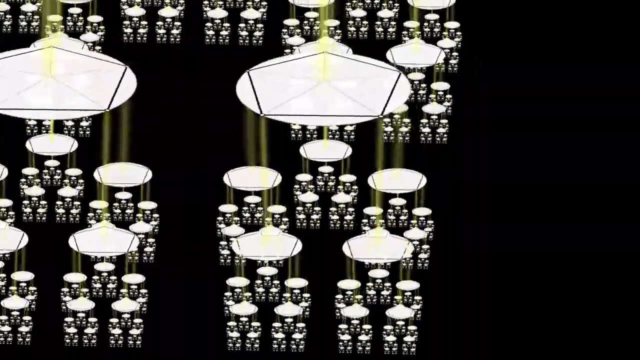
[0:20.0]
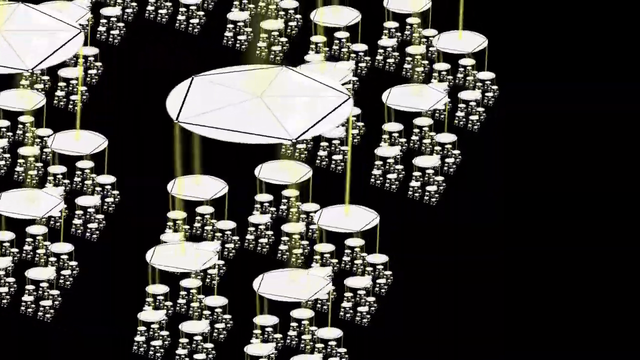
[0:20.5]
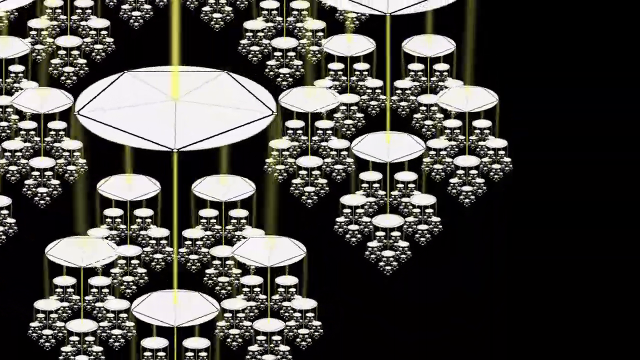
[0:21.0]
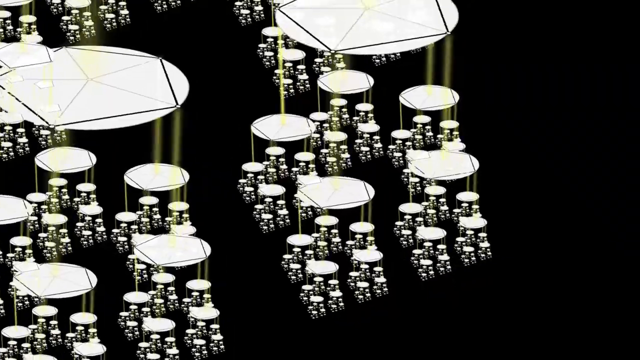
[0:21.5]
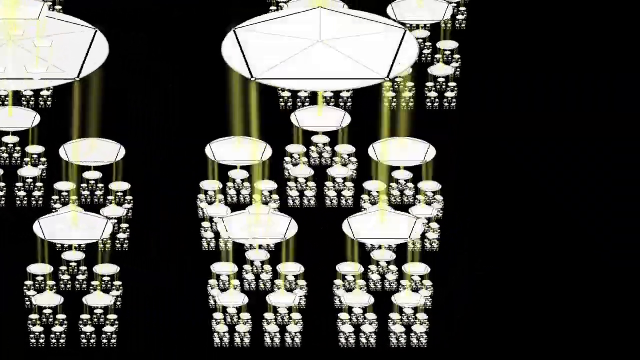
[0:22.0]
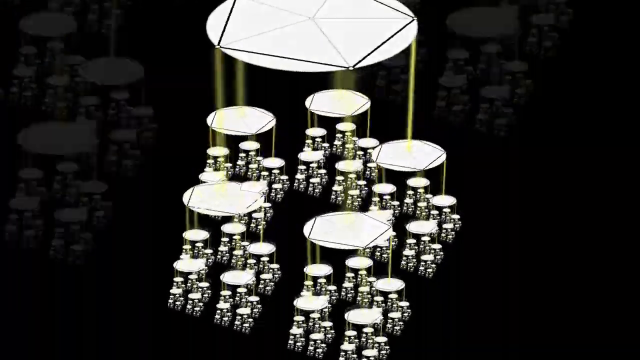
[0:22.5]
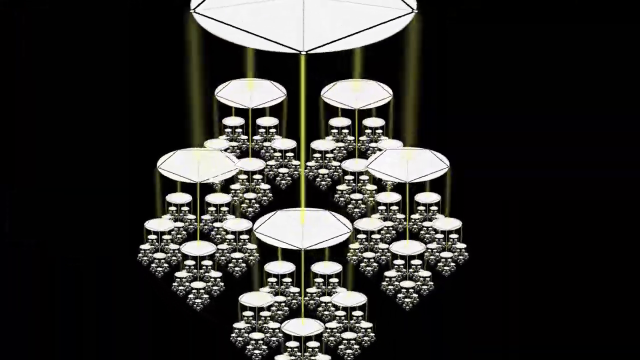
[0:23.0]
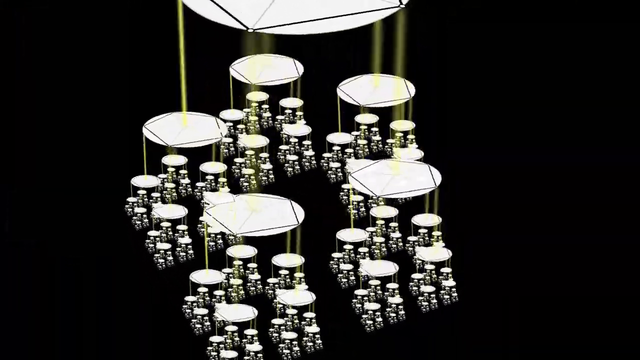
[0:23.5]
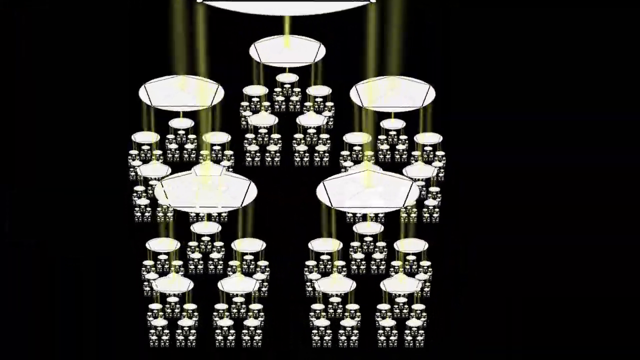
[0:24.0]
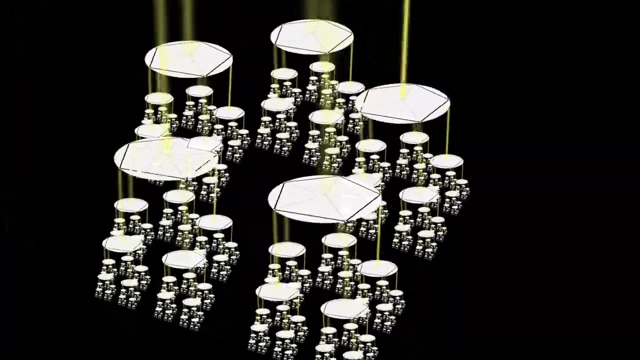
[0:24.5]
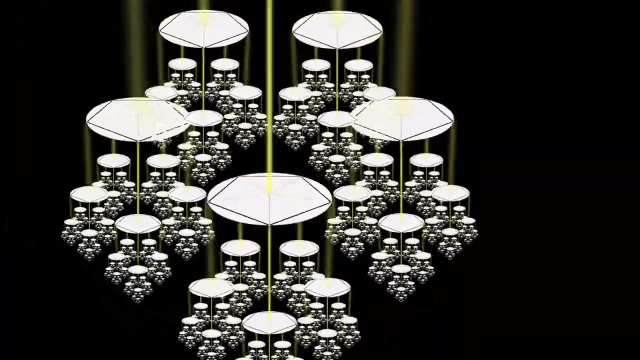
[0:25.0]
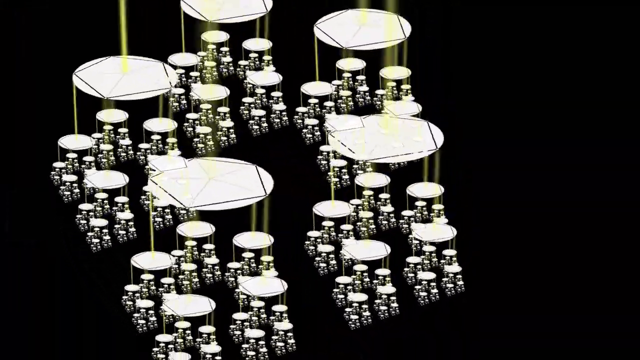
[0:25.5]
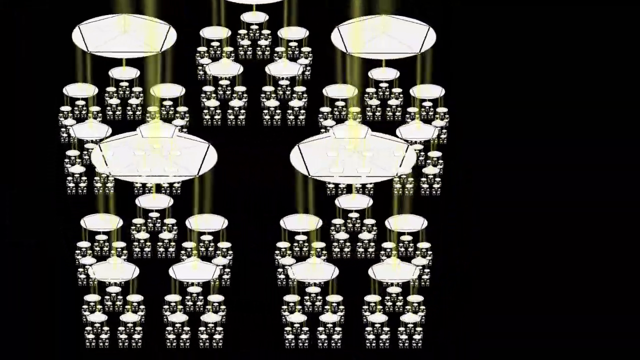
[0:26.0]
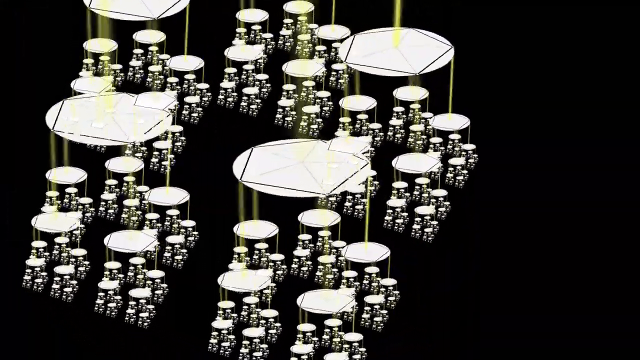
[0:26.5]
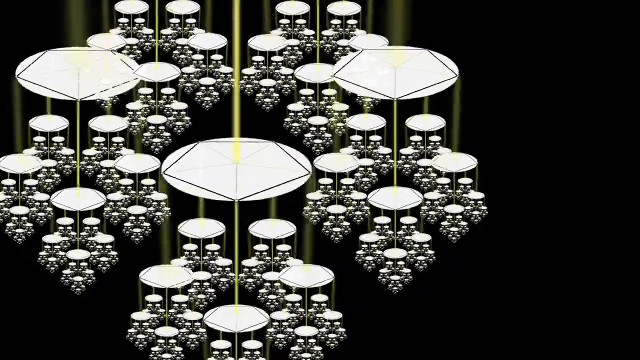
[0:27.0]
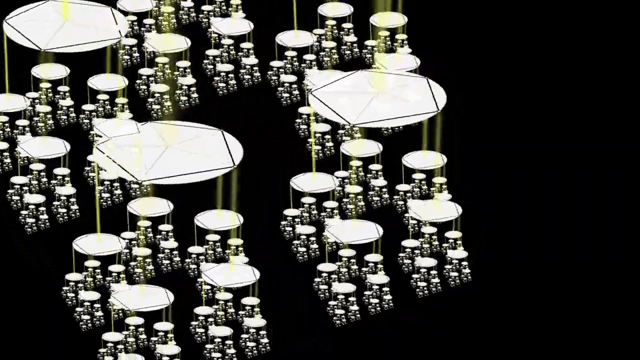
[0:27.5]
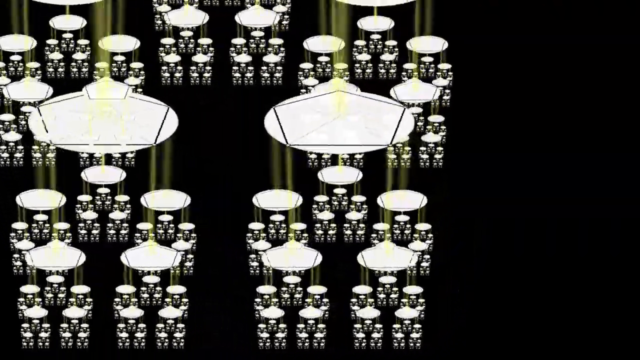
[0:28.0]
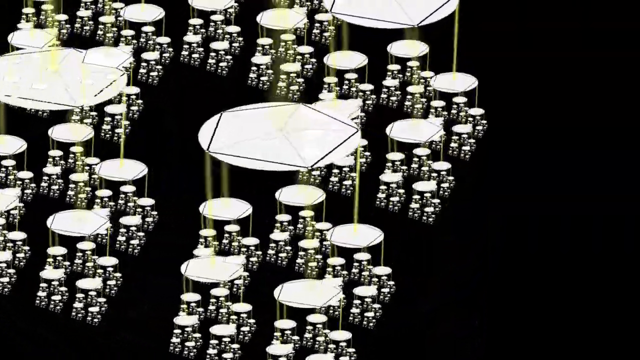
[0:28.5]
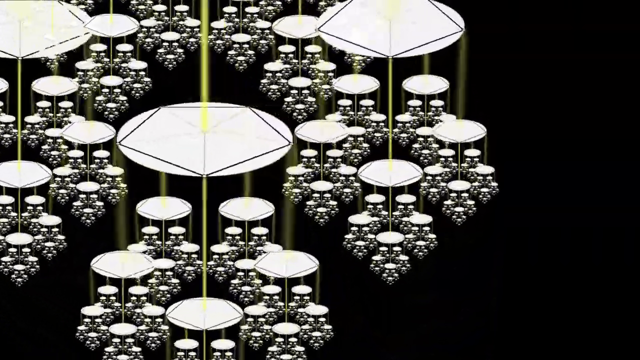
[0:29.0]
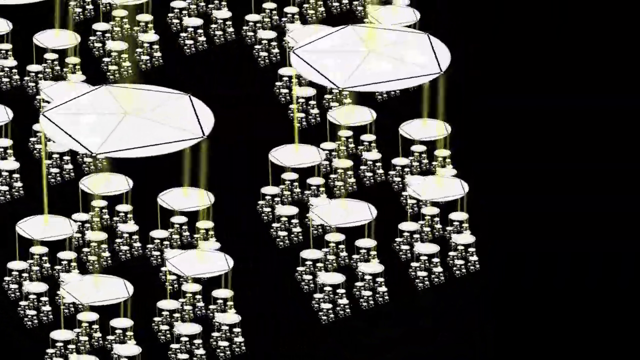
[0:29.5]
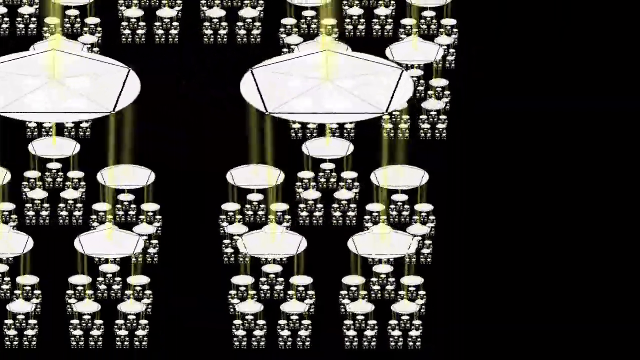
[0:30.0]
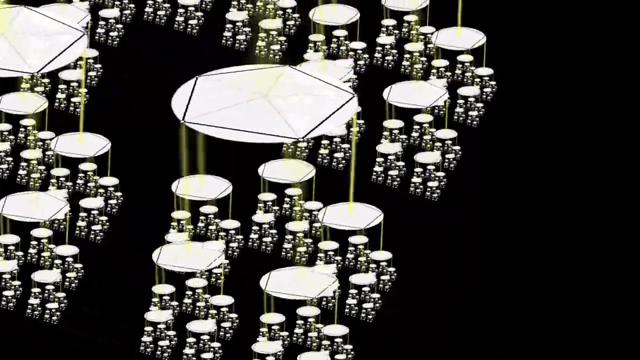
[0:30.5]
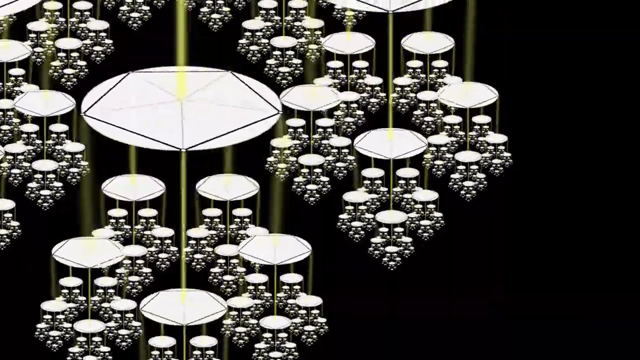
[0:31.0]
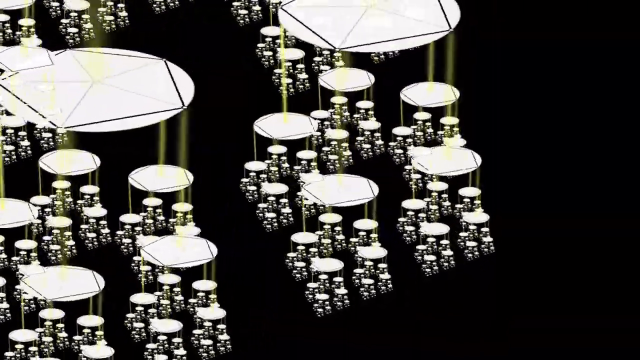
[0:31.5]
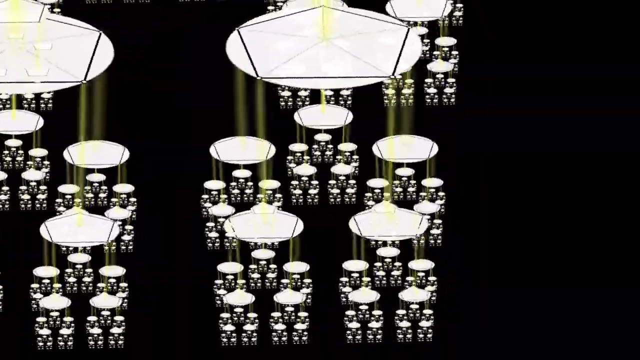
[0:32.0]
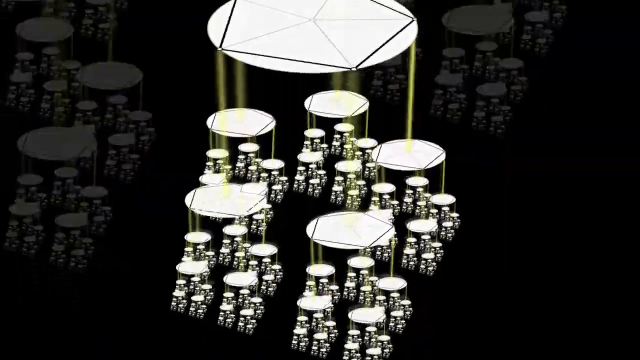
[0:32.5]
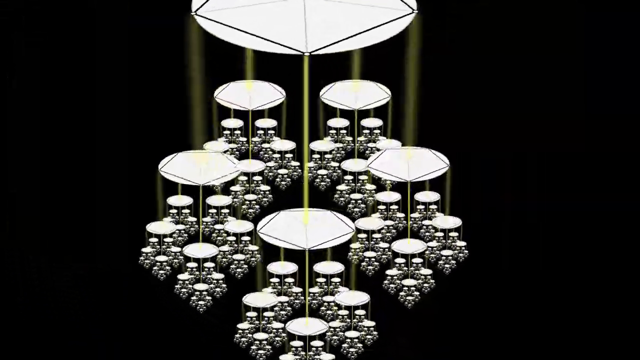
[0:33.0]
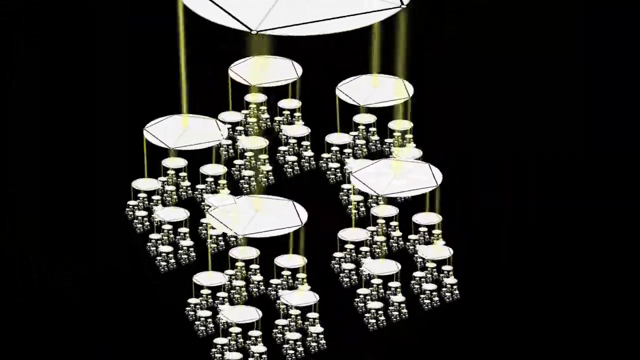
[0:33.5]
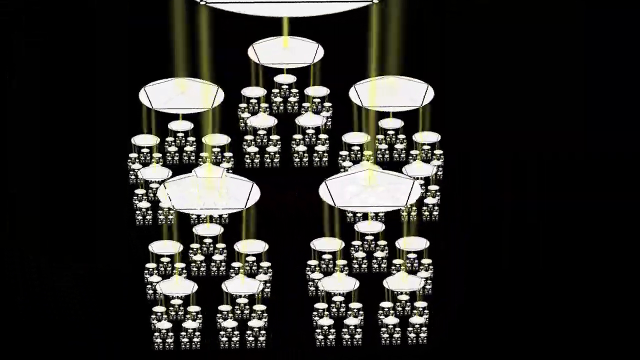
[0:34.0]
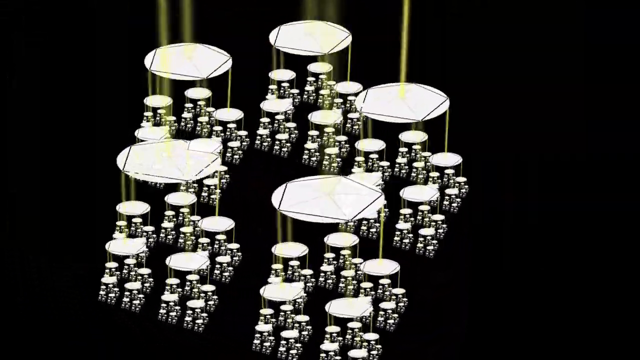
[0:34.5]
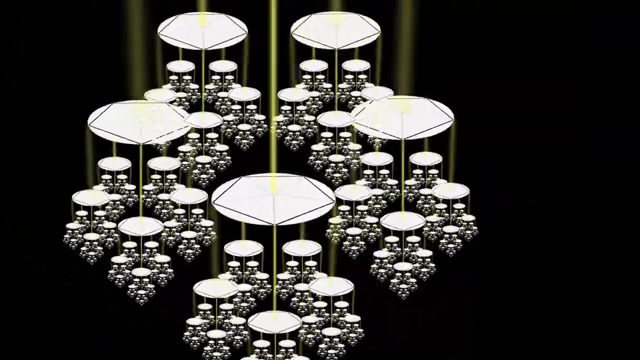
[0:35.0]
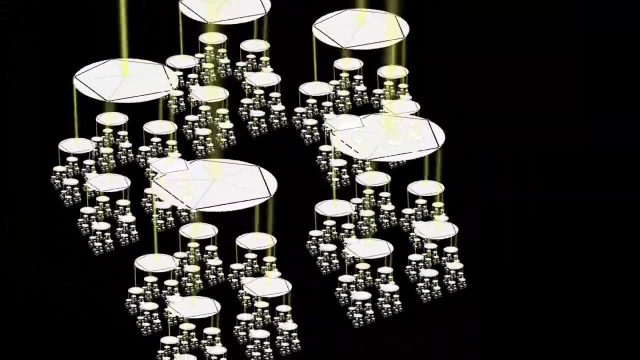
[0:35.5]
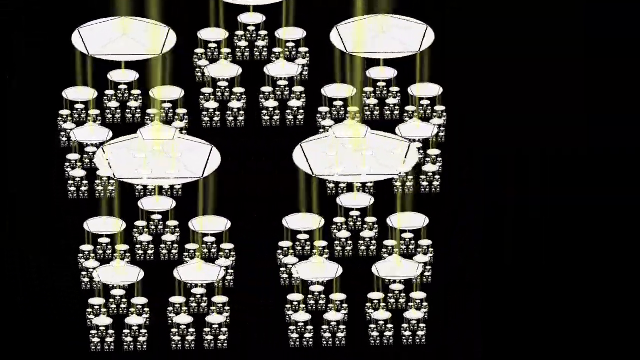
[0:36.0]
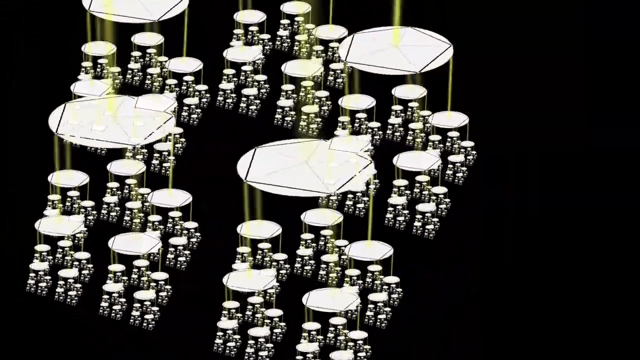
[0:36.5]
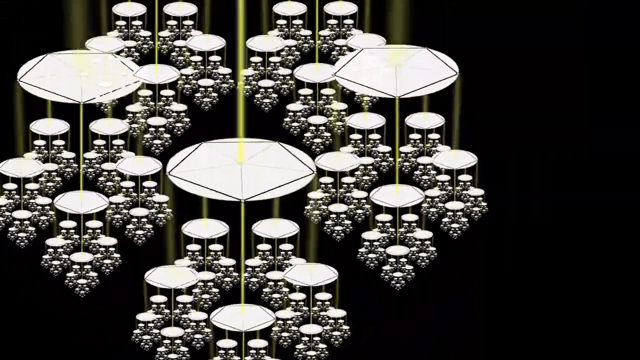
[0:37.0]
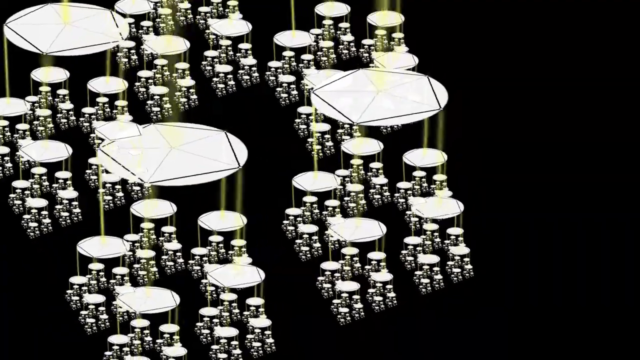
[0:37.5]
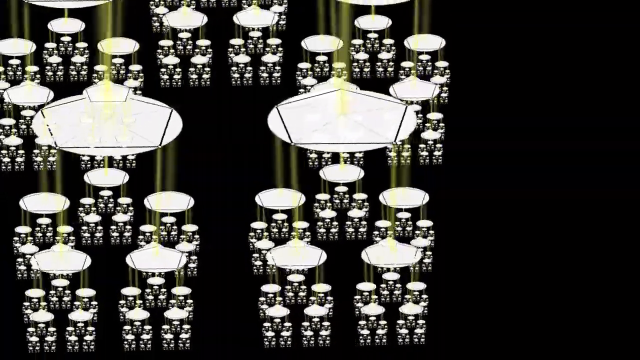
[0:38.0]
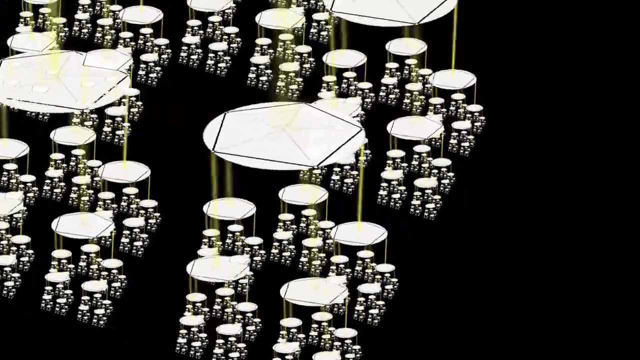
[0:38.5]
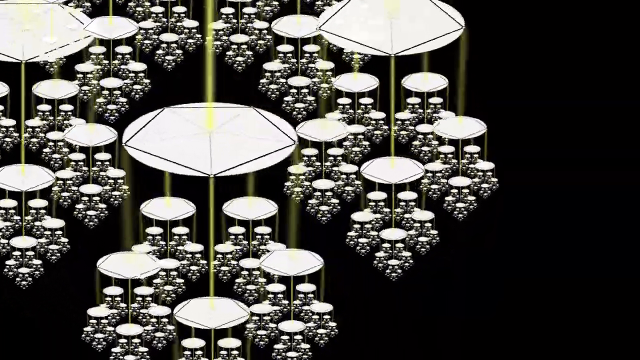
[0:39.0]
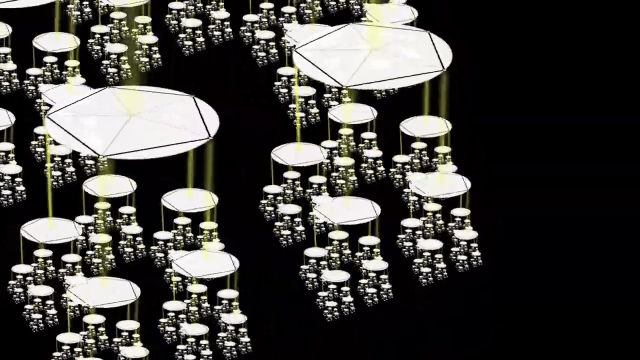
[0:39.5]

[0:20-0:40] Inside an empty black background are flat white discs with a black pentagram shape on top of them. From each of the five points of the black pentagram on a white disc, a yellow beam of light descends onto a smaller white disc with a pentagram shape on its top or face. From each point of that smaller flat white disc come more beams of light, and this continues repeatedly down to the smallest visible disc. The view pans forward and zooms in as all of the flat discs spin clockwise. It focuses on one large pentagon-covered white disc in particular; as it continues to spin clockwise, the view zooms in on the five discs beneath that largest one, then zooms in on the five discs under each of those five, then focuses on another five discs, continuing to focus smaller and smaller as the discs spin clockwise.